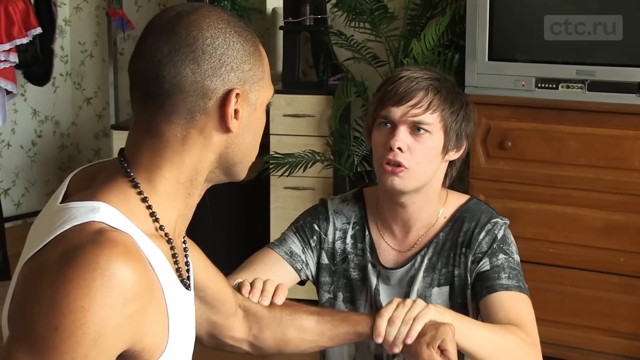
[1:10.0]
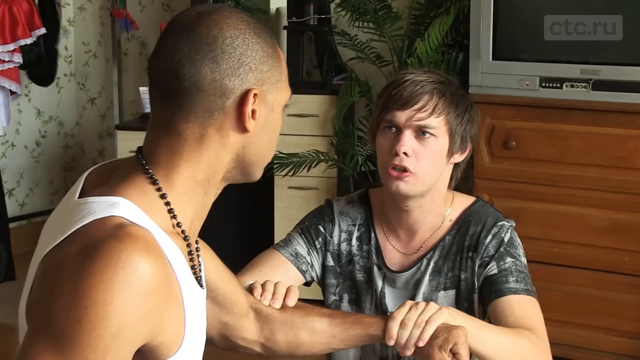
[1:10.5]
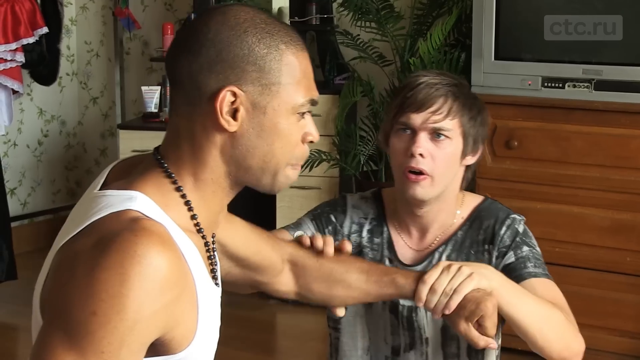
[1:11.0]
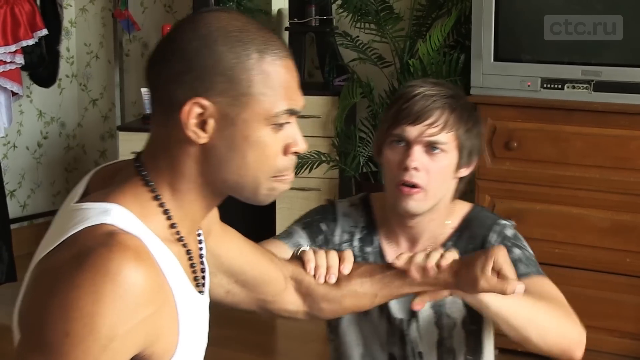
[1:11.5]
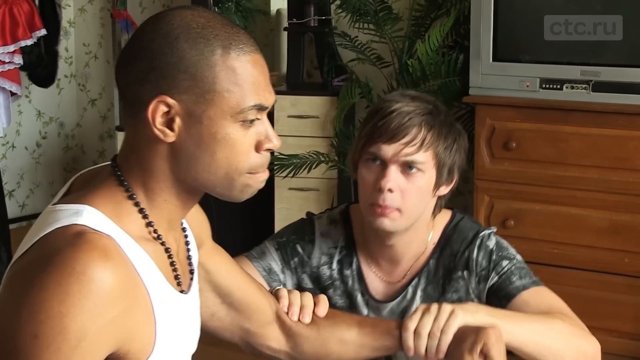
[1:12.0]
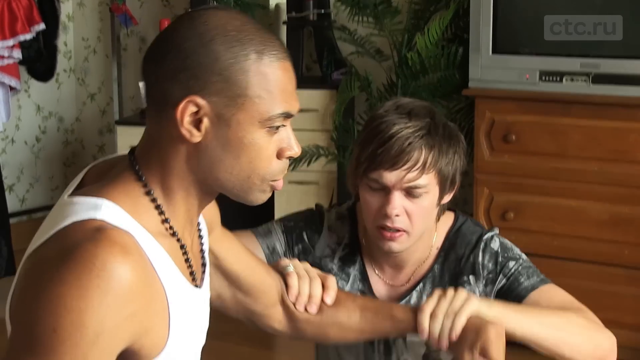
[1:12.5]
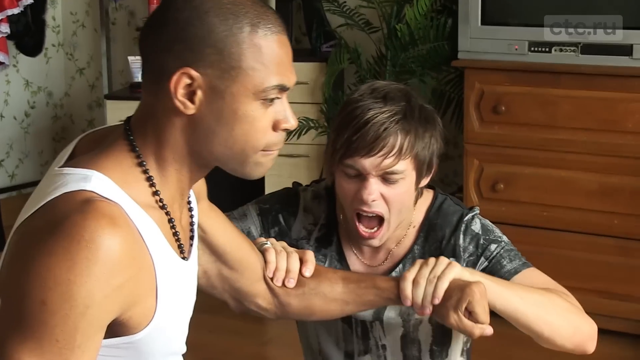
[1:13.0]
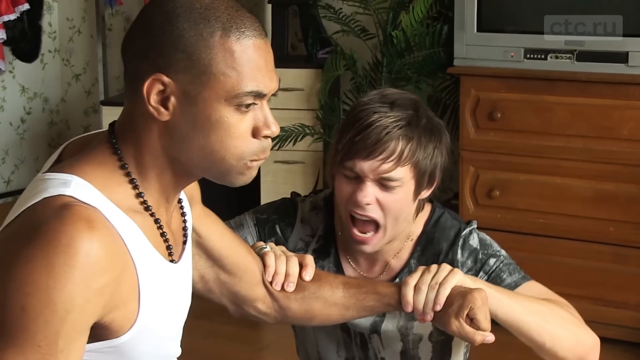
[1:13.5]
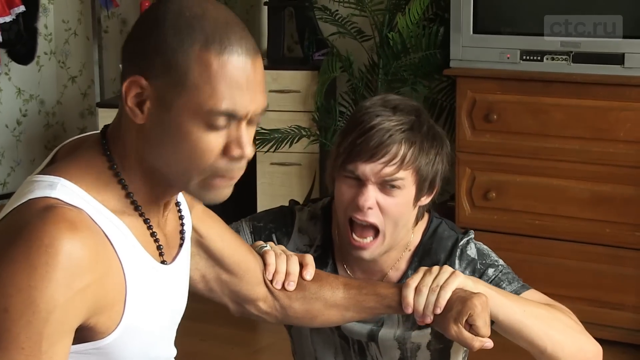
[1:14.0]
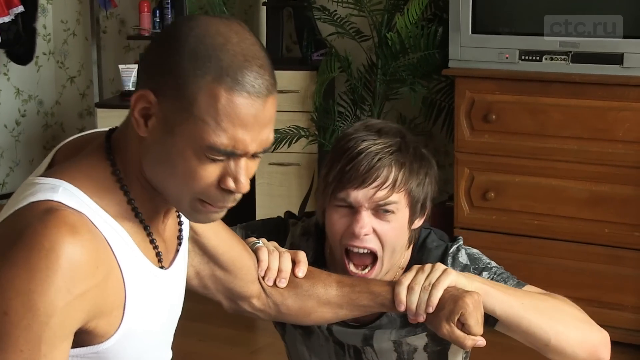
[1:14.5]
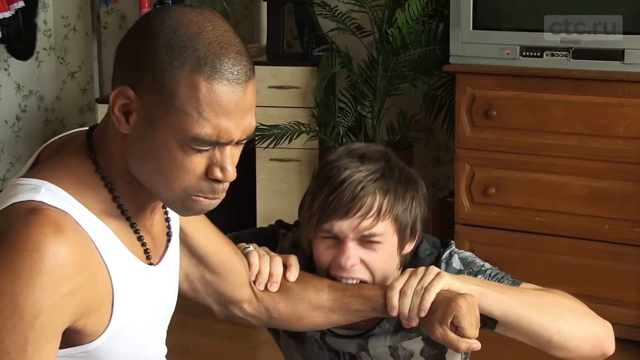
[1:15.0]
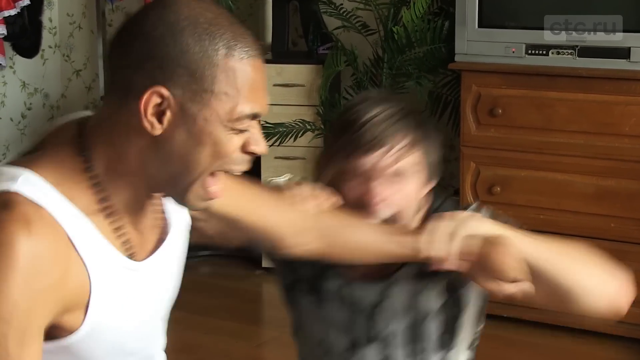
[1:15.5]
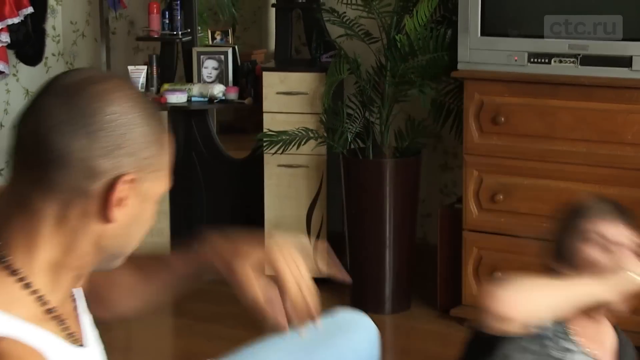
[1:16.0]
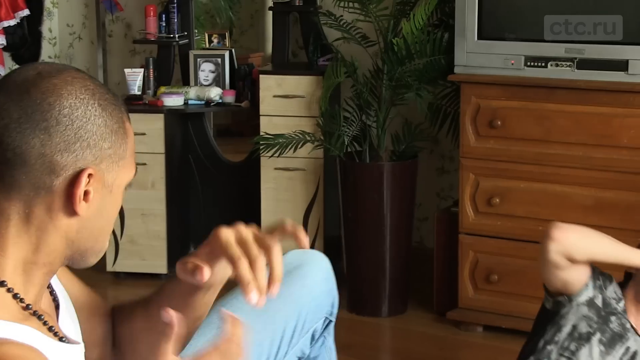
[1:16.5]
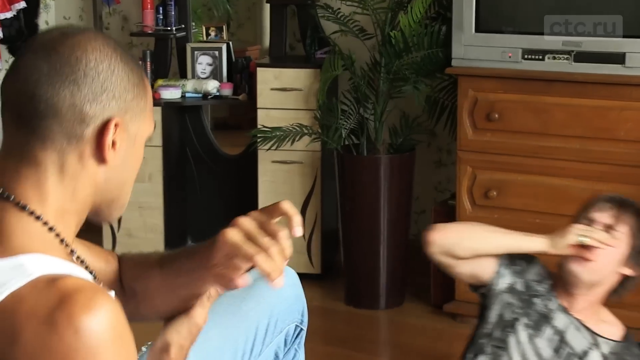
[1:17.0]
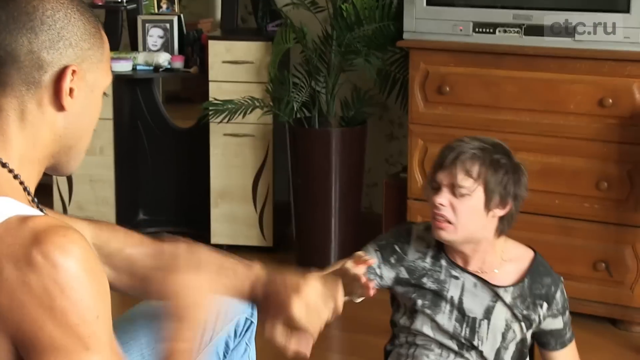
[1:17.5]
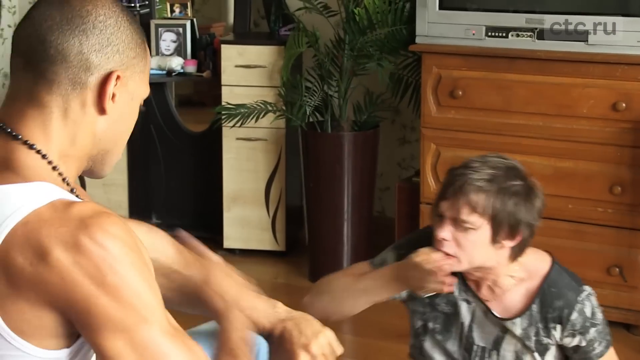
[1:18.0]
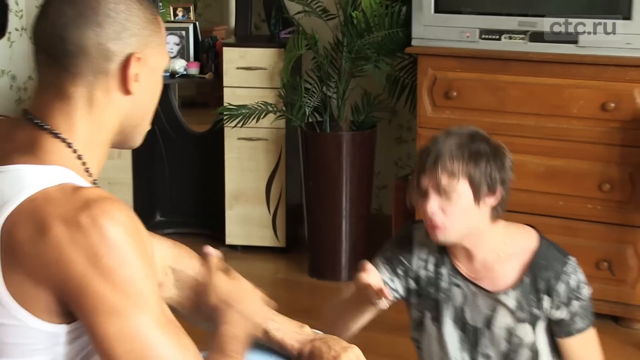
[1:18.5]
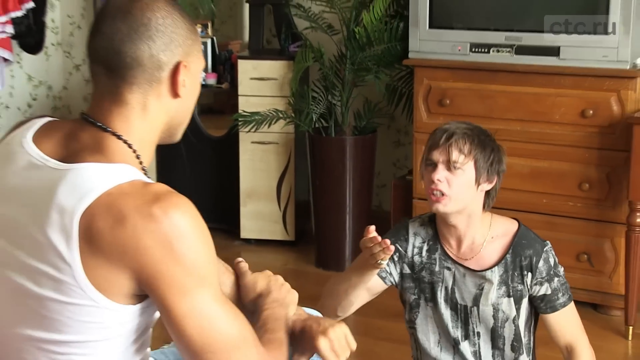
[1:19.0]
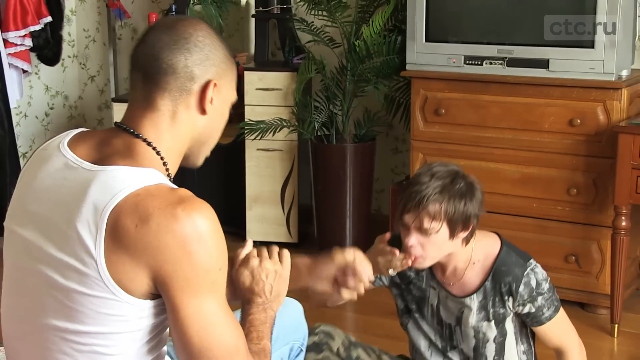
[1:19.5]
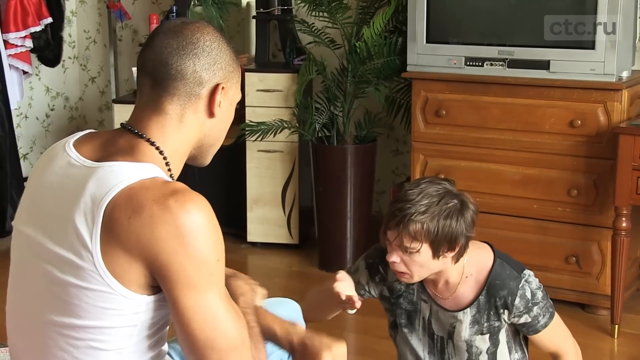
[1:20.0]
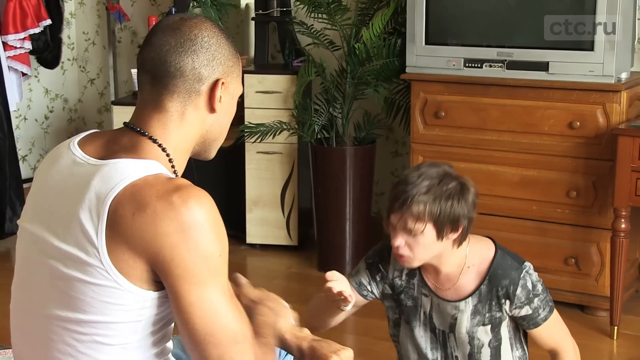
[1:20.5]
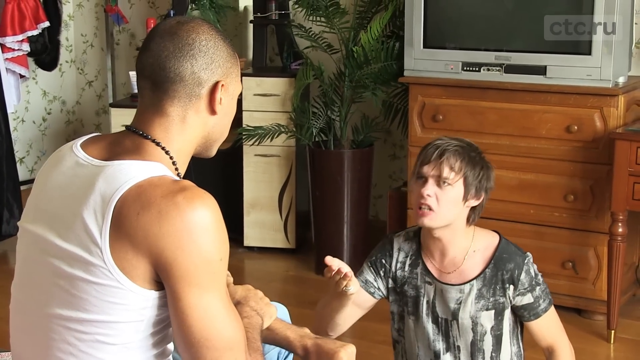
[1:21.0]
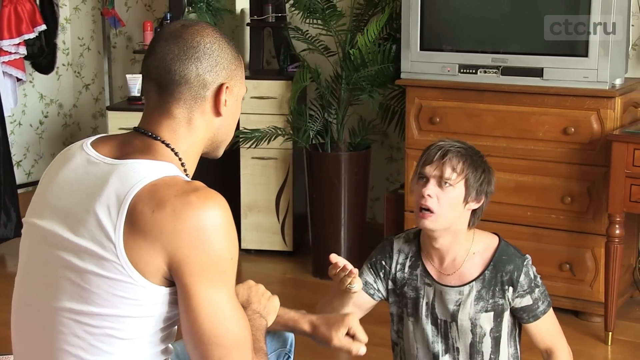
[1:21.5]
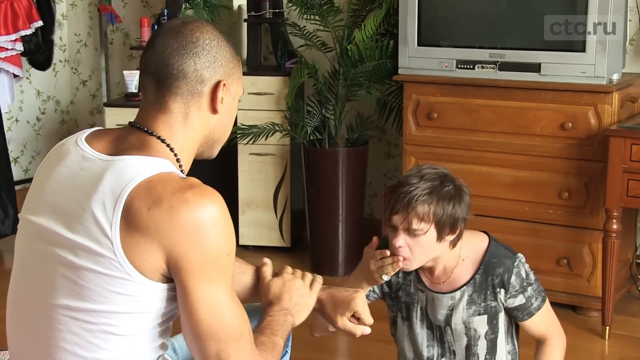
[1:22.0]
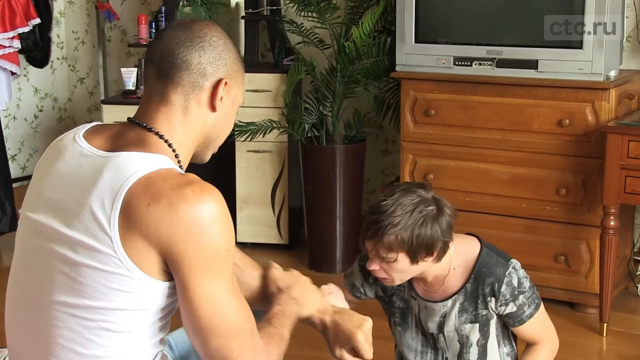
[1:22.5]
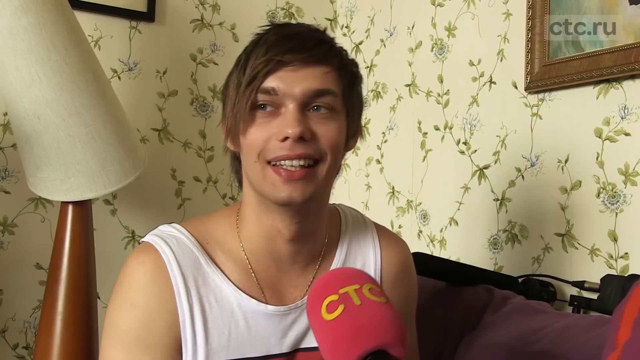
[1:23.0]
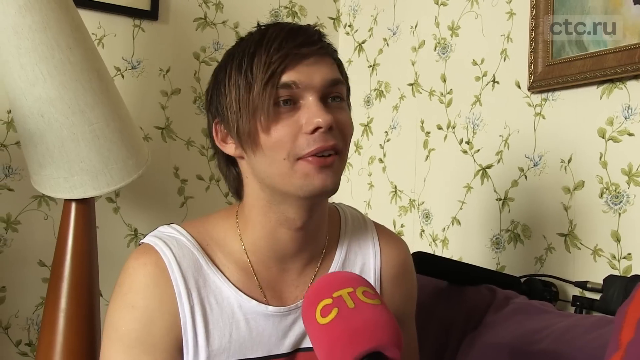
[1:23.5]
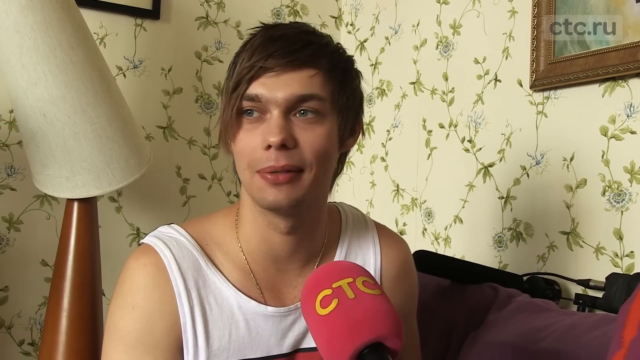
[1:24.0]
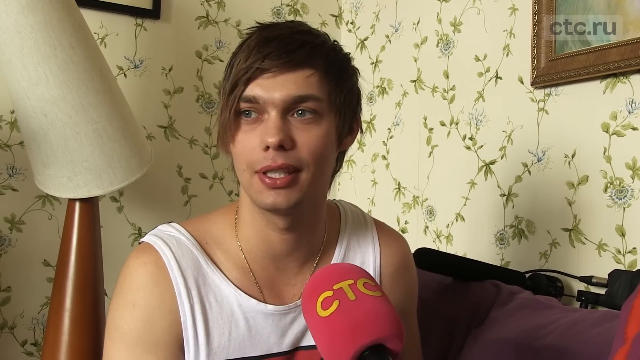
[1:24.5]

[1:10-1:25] In a scene from the show, the white guy holds the black guy's arm, about to bite him, while the black guy sits on the bed. He tries to bite him but pulls away, then bites him. The black guy reacts violently, and the white guy is thrown back, falls on the floor and sort of touches his face, looking like he hurt his teeth. The video cuts to the white guy in the Superman shirt being interviewed with a CTC microphone, talking while sitting on the couch in the same interview room.